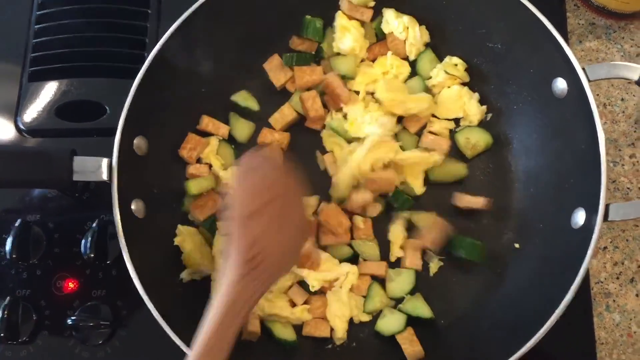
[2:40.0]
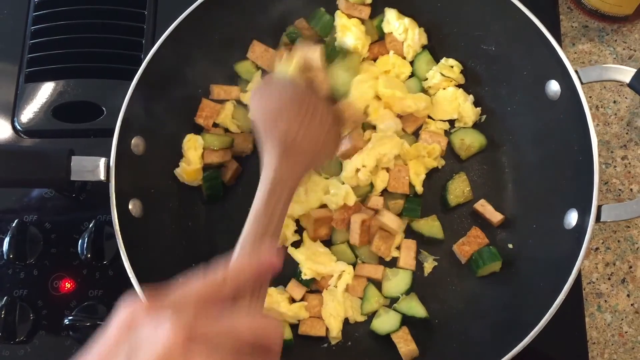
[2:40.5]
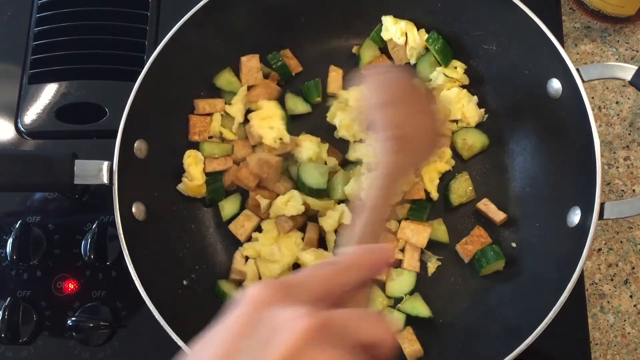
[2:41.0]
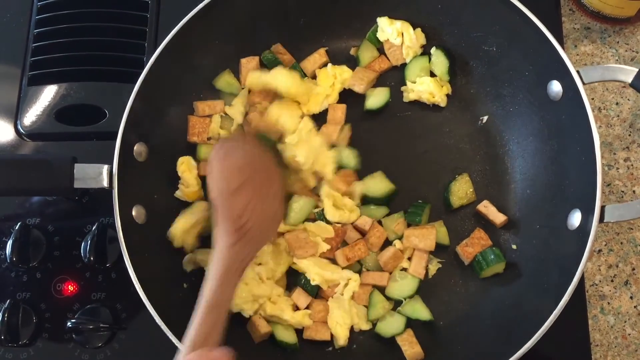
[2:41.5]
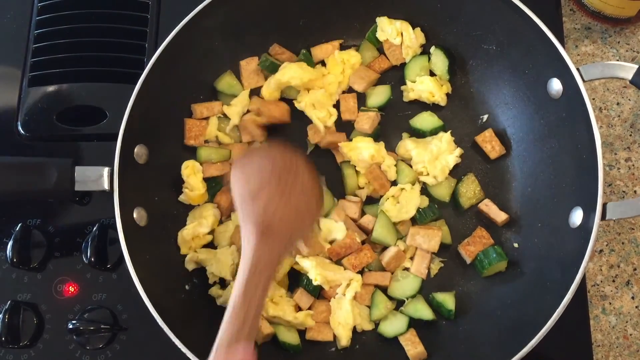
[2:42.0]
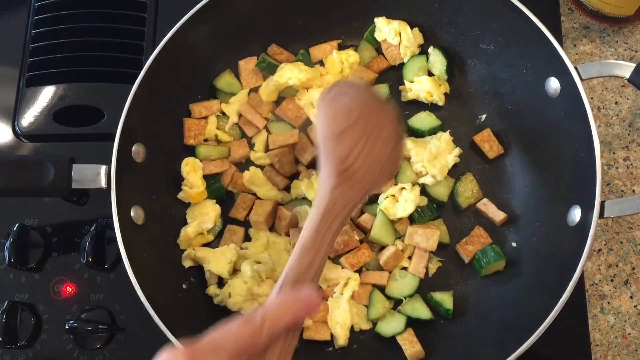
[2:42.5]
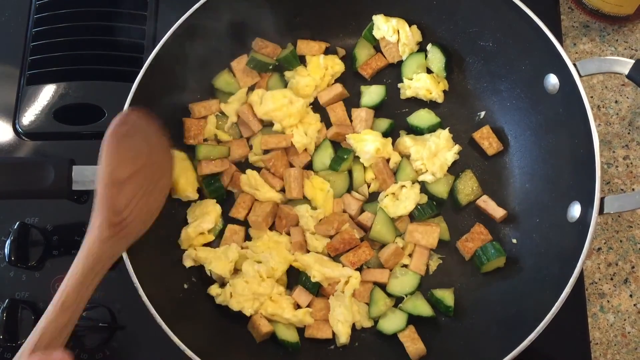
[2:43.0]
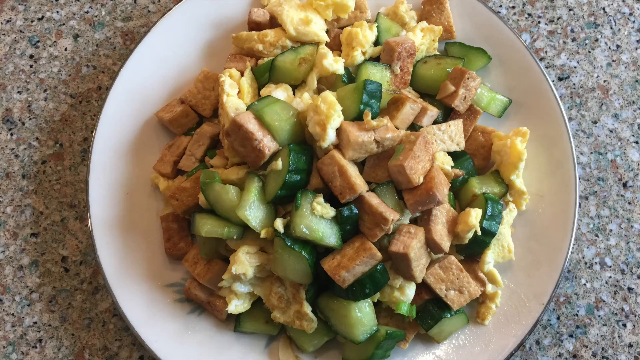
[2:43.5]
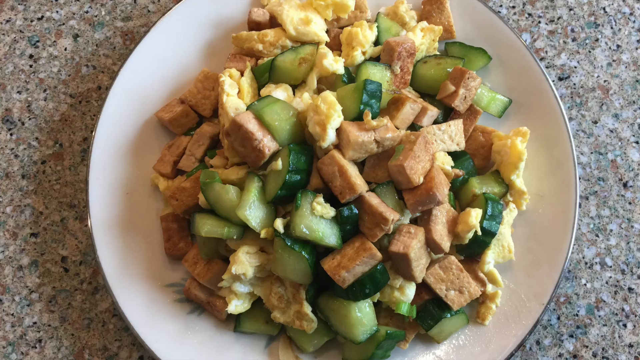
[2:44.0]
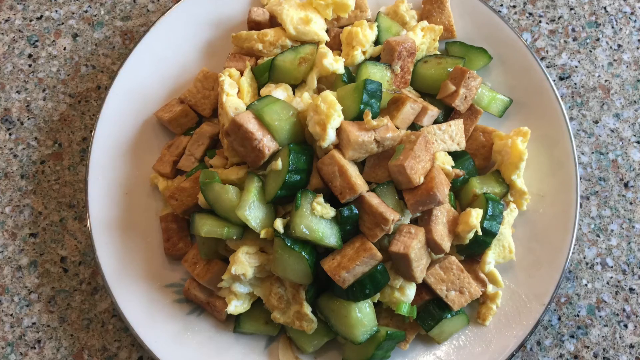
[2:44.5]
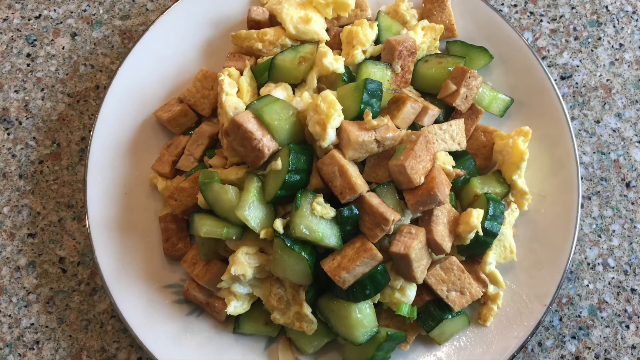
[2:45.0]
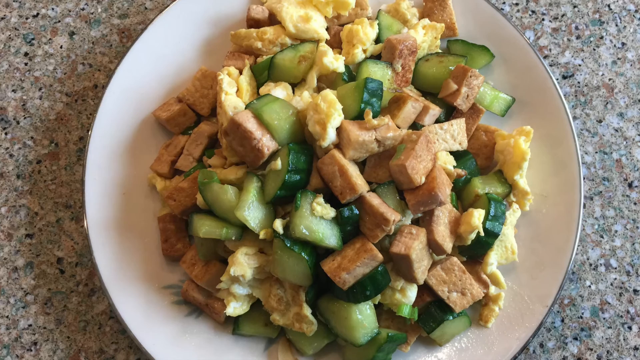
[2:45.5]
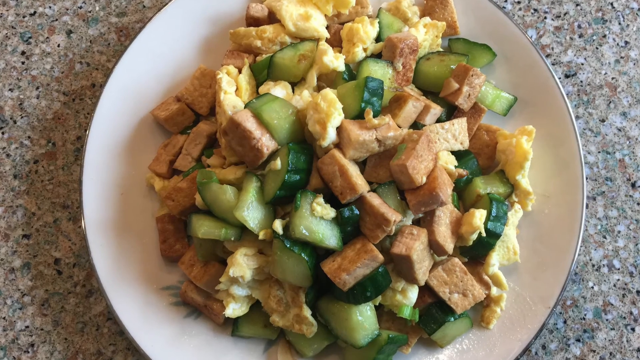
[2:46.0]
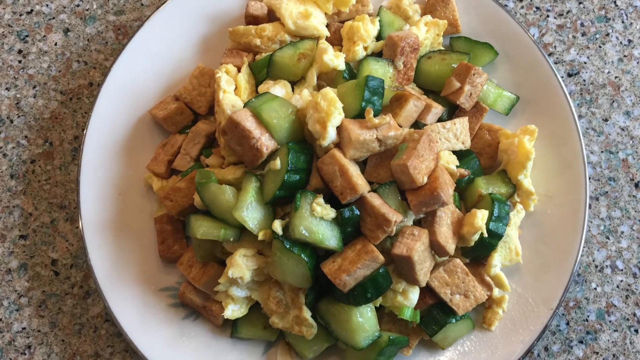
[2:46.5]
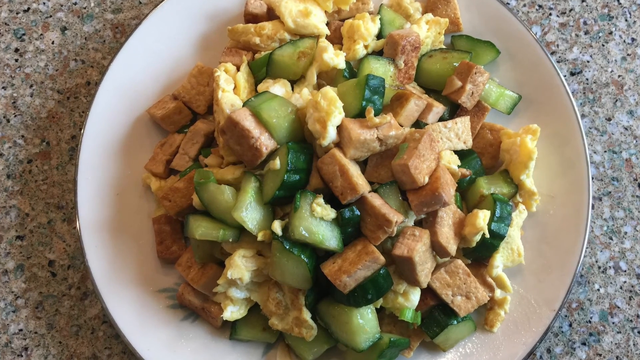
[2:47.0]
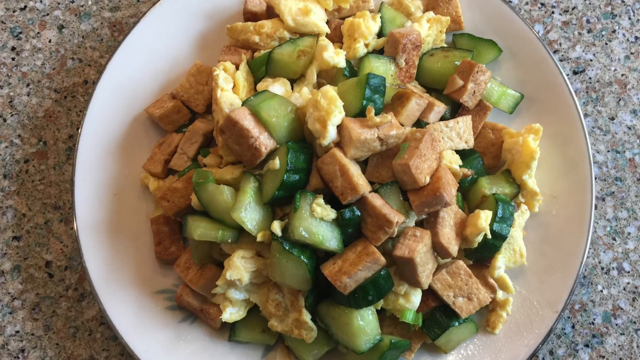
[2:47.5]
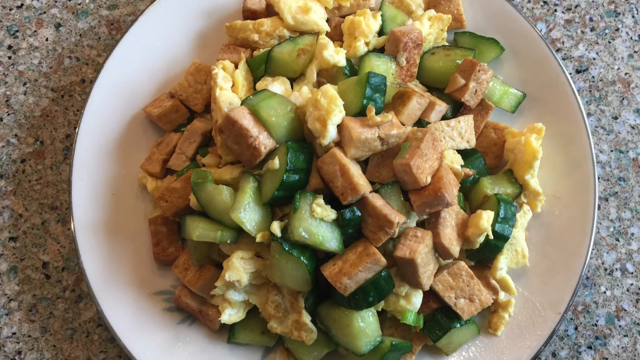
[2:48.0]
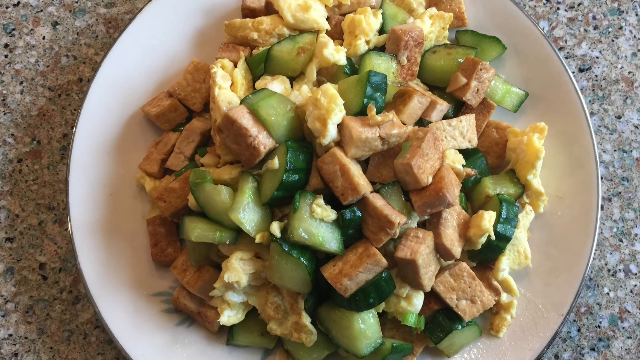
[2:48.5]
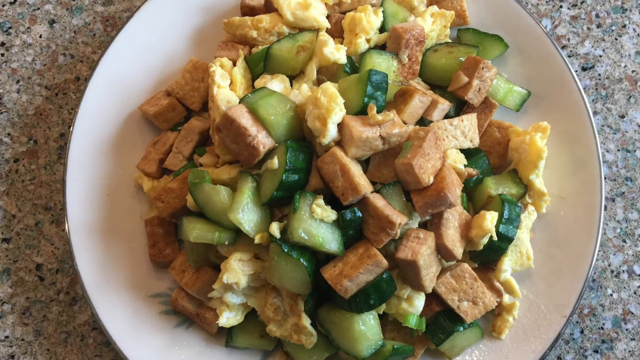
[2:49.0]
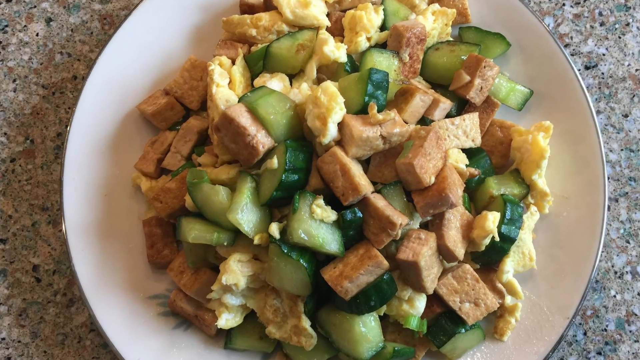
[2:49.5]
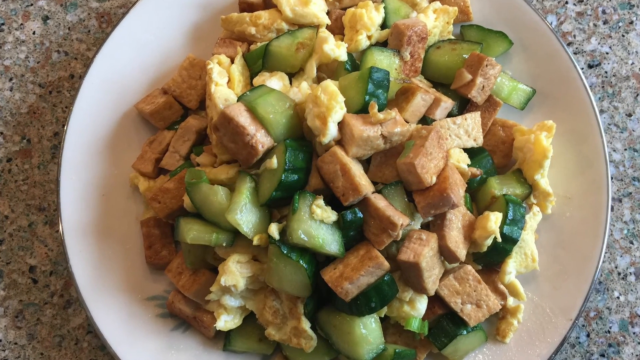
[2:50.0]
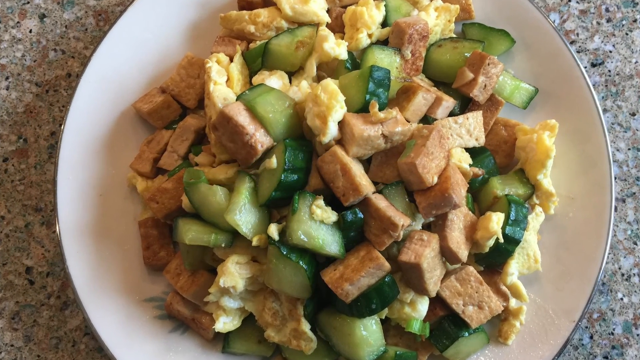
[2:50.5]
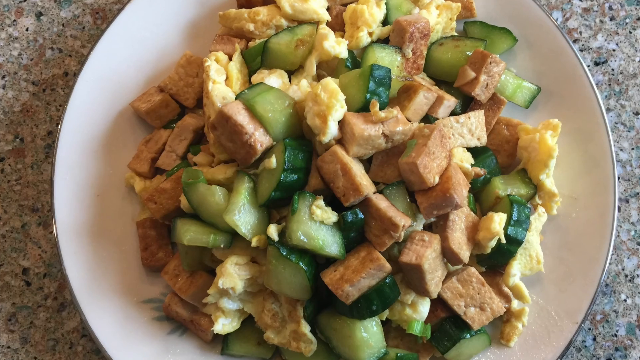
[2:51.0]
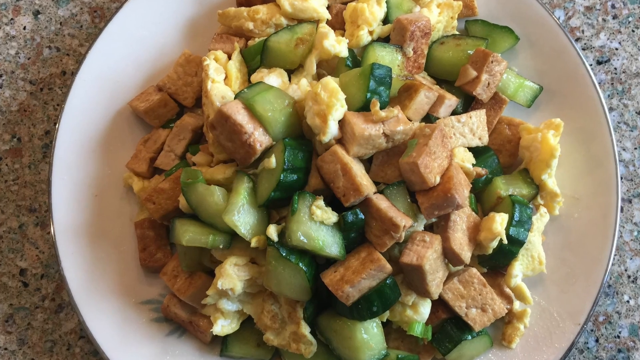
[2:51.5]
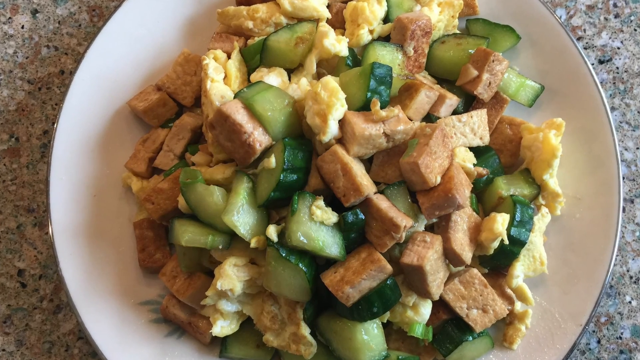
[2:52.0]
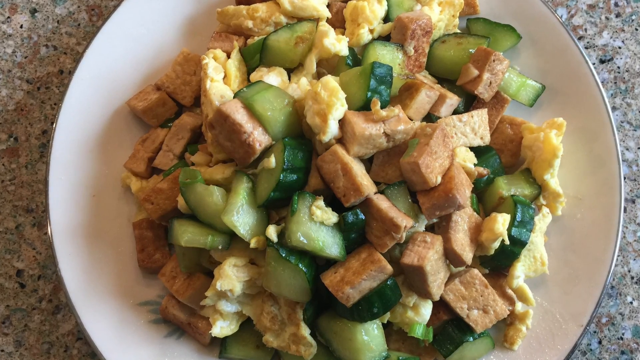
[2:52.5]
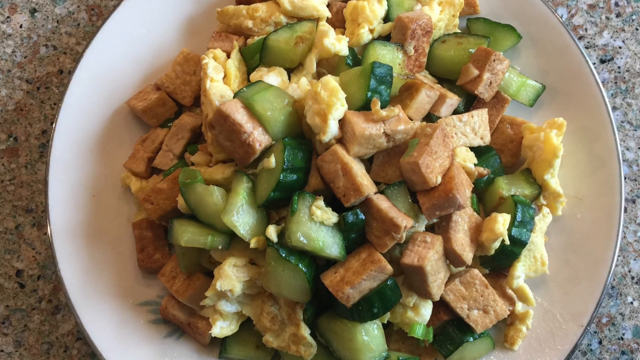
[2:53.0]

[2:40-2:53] He is still mixing everything together, moving it back and forth, with the eggs on top in some spots. The hand is briefly visible. The mixing has no particular pattern; he seems to be making sure the eggs turn over. Then the finished product is shown on the white plate, looking like the dish at the start. The zucchini is somewhat cubed, almost in quarter circles, with darker green skin and lighter green flesh.